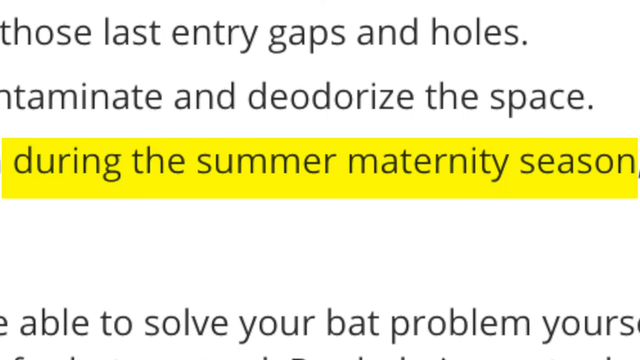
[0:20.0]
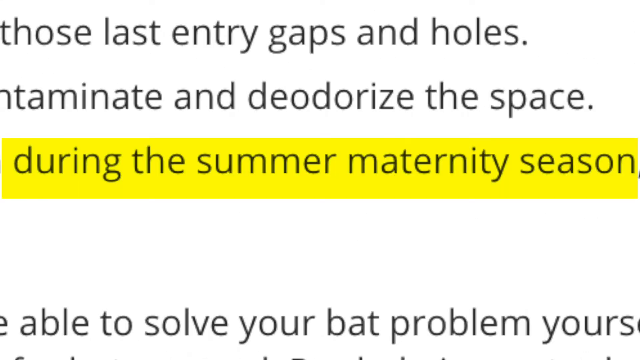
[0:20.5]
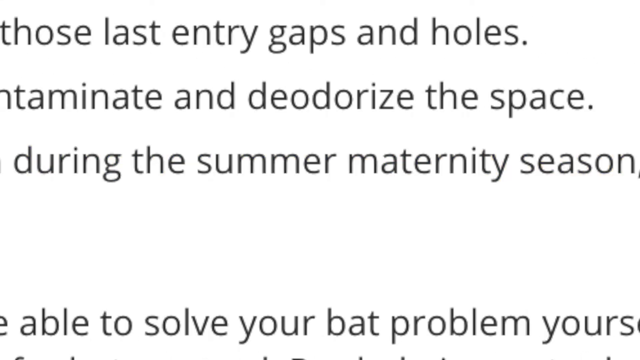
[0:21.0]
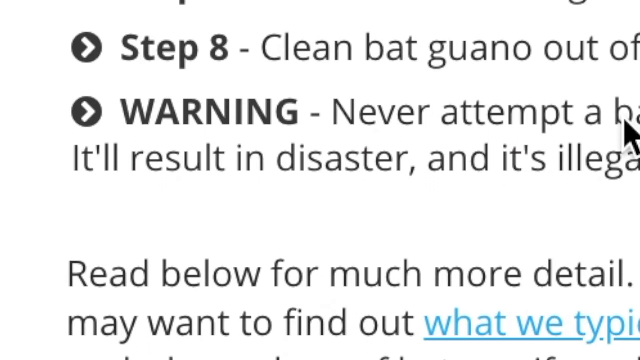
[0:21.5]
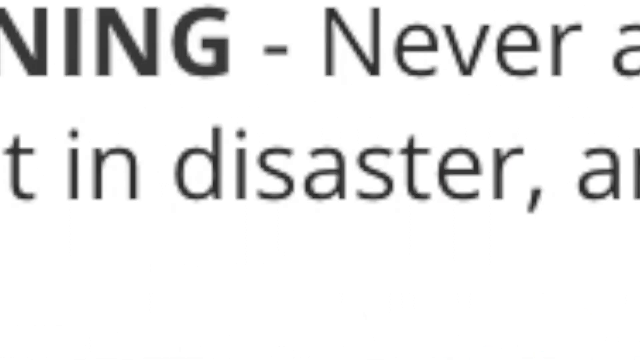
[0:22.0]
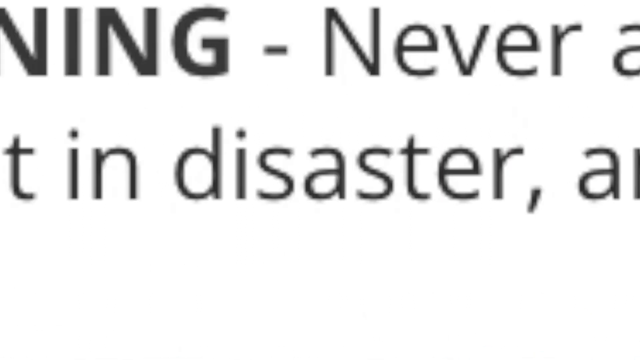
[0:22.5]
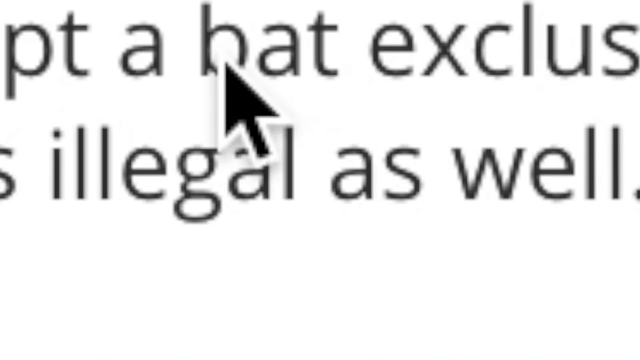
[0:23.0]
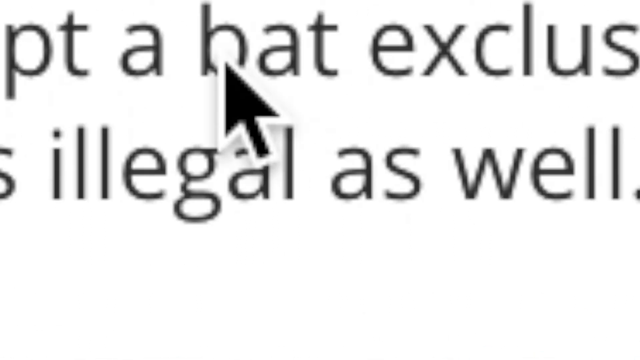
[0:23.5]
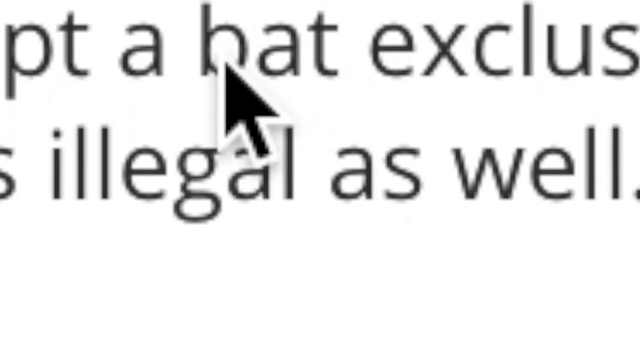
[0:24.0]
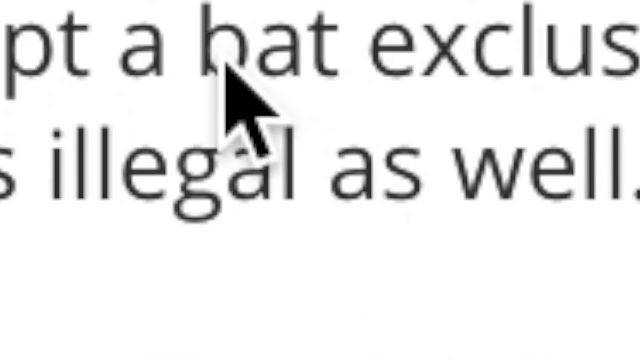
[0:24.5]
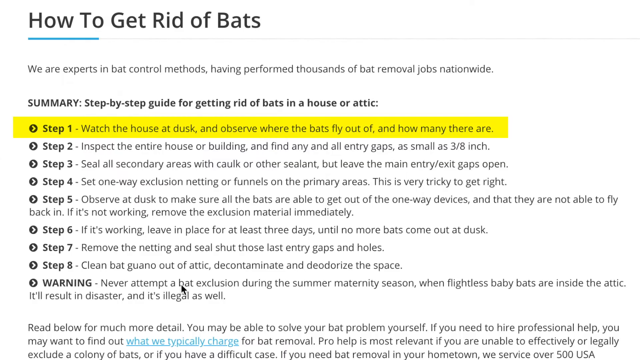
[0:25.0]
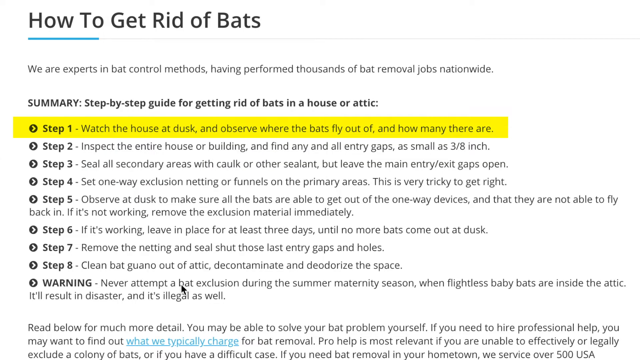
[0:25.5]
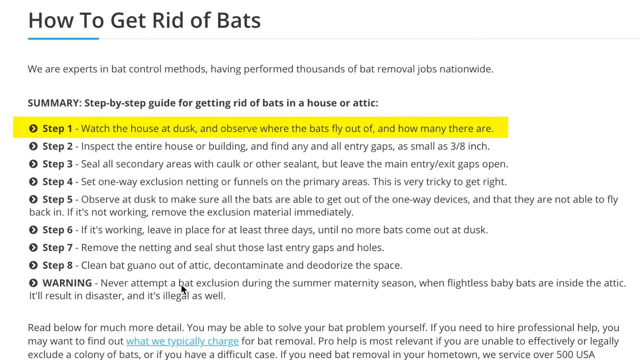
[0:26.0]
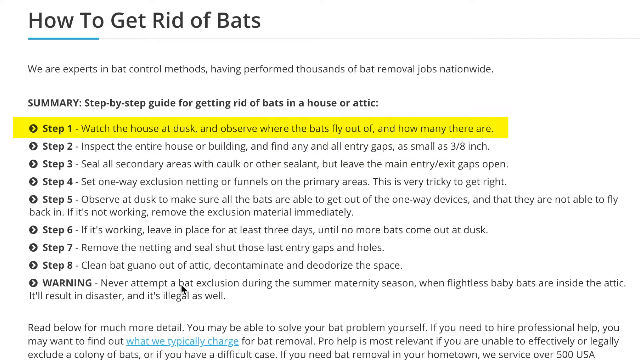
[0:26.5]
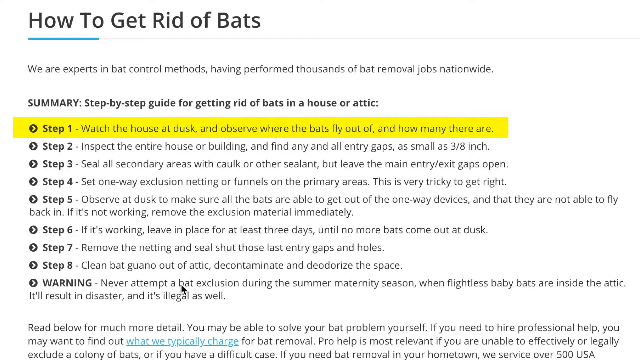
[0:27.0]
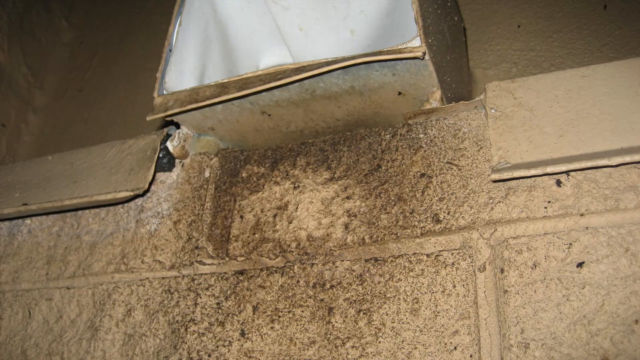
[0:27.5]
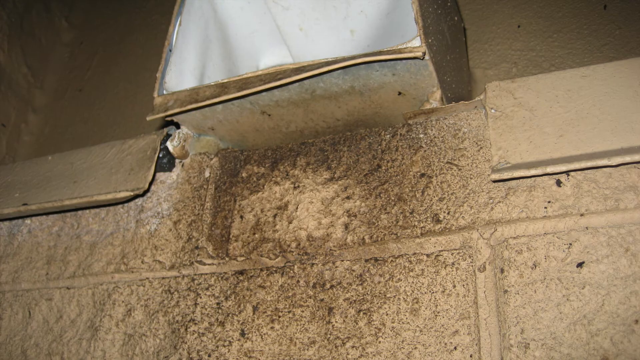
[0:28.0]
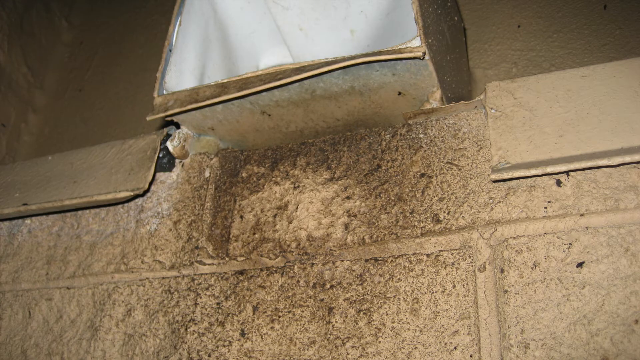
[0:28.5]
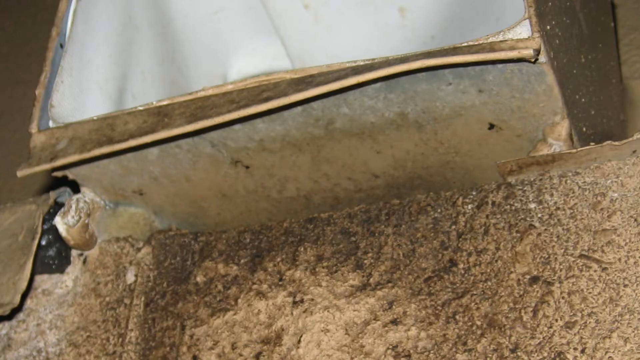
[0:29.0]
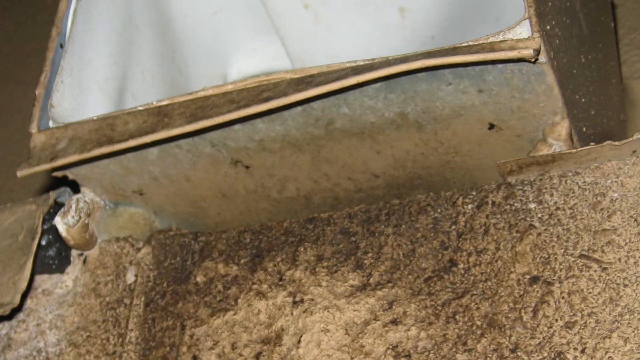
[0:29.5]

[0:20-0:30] The information is shown in a zoomed-in view so close that only parts of it are visible. It reads "Step 8," "Clean Bat Garano," and there is a warning; the Step 8 and the warning are bolded in black. An arrow appears, possibly the computer cursor, pointing to "bat." The word "illegal" is also visible. There is a summary of a step-by-step guide with about seven or eight steps, with a warning underneath. Then the bats are shown on the building. It looks like they may have chewed a hole through a connection underneath the area where they are congregated; there is definitely a hole, with some bats in it. Residue from where they were hanging out marks the side of the building underneath a boxed-out vent structure: it is black, almost like stringy soot.